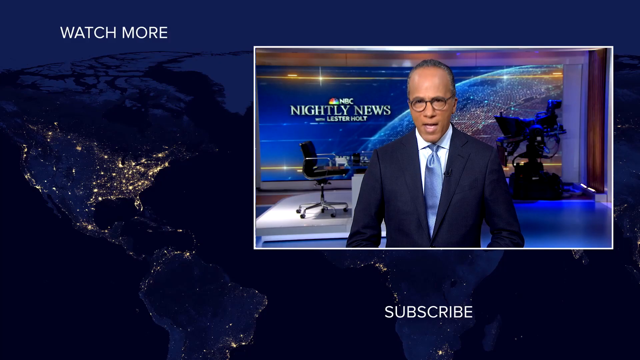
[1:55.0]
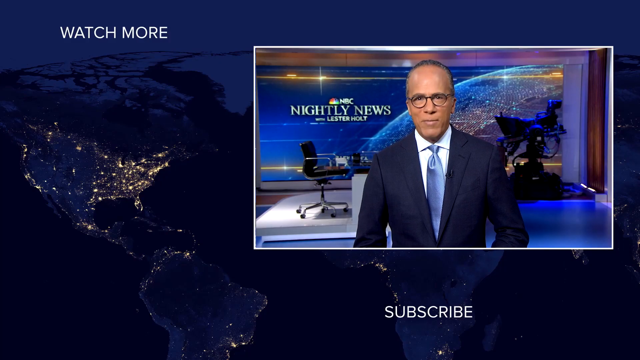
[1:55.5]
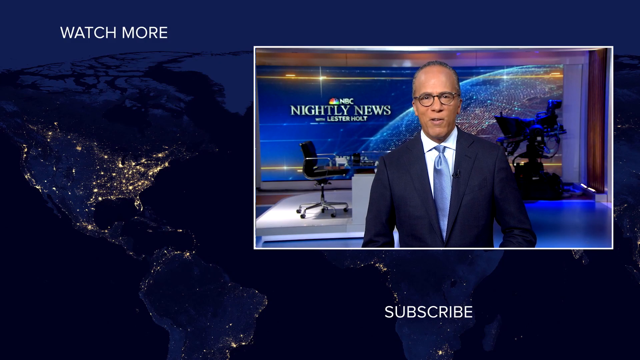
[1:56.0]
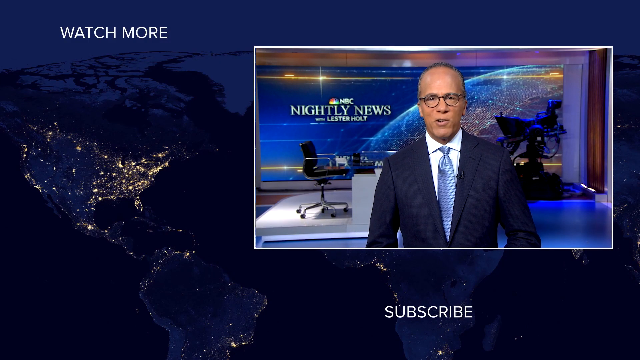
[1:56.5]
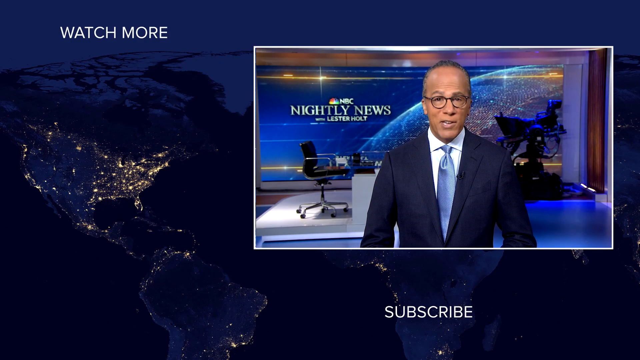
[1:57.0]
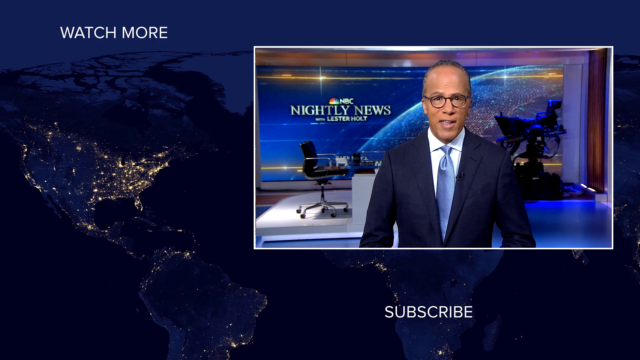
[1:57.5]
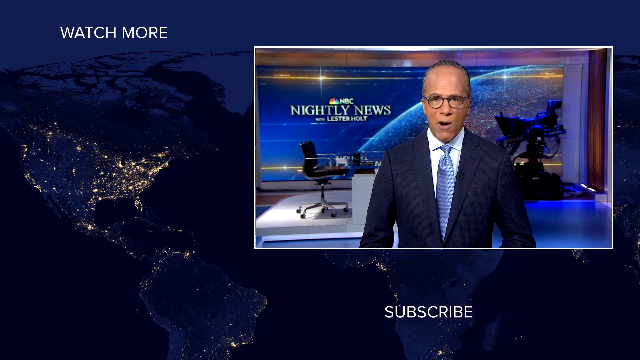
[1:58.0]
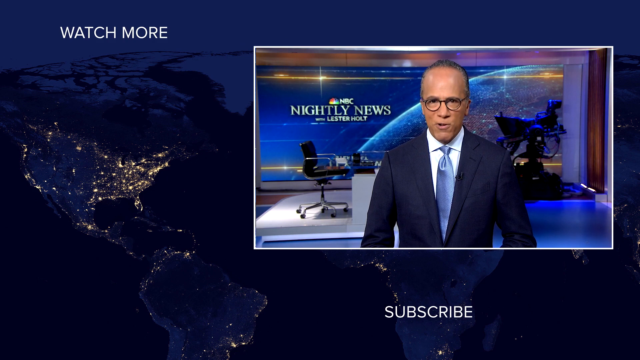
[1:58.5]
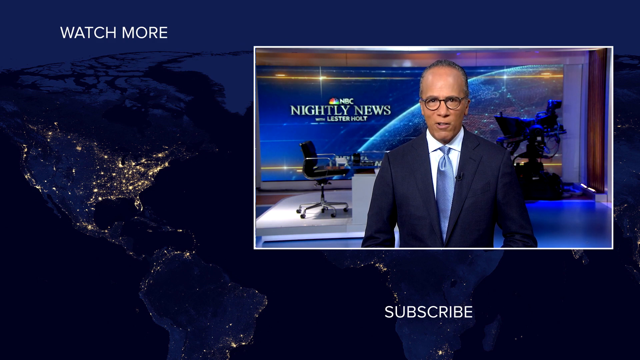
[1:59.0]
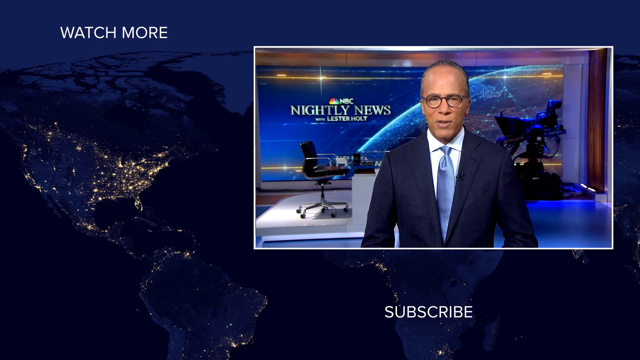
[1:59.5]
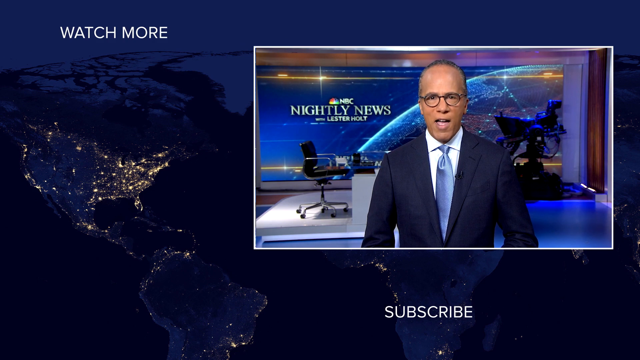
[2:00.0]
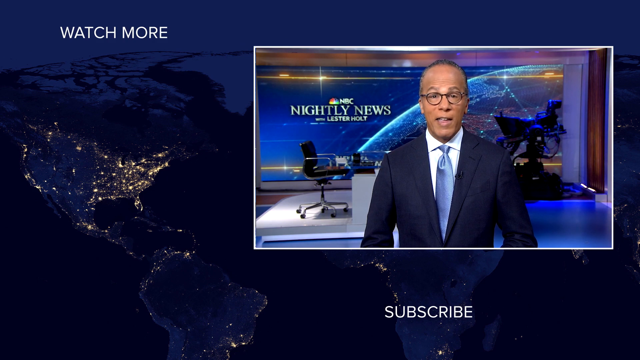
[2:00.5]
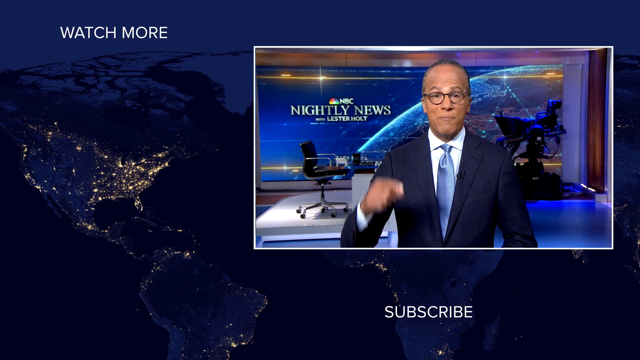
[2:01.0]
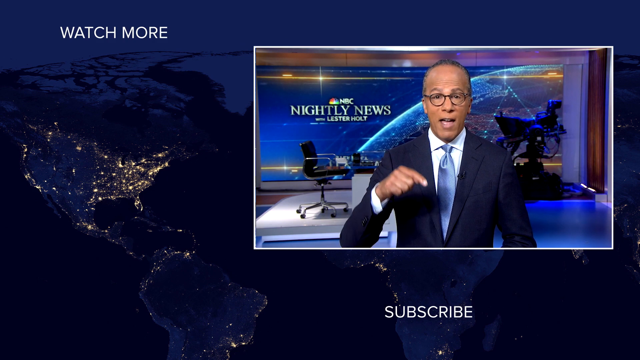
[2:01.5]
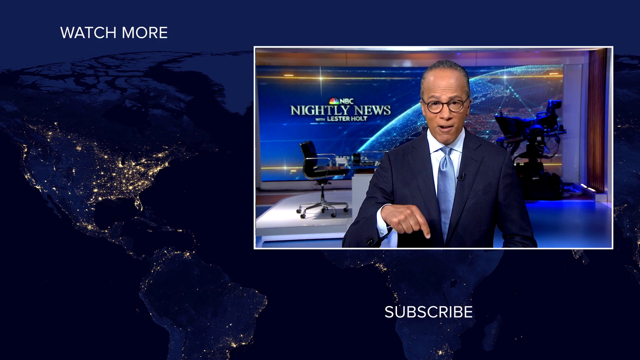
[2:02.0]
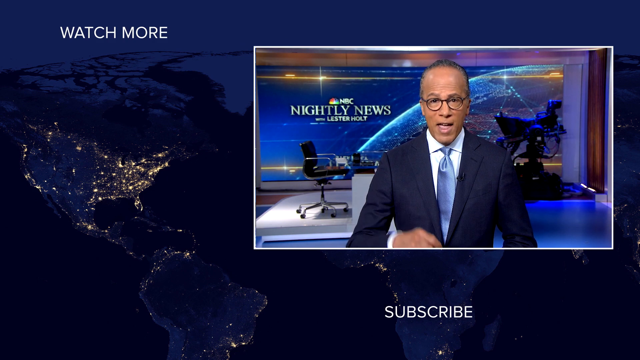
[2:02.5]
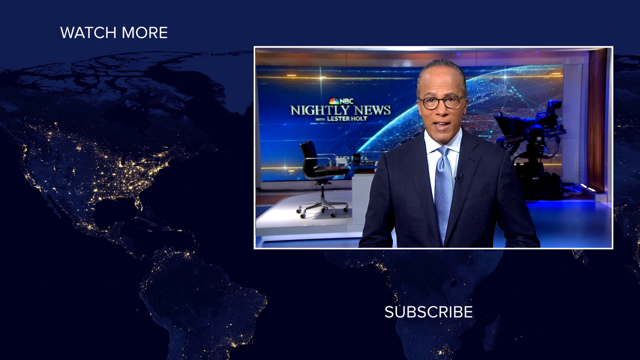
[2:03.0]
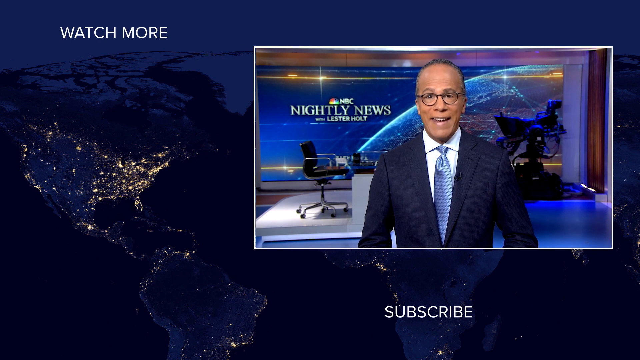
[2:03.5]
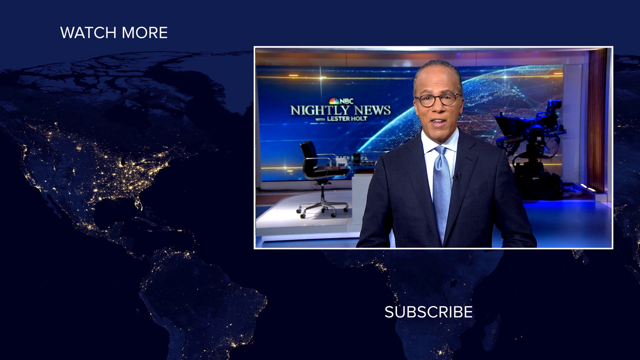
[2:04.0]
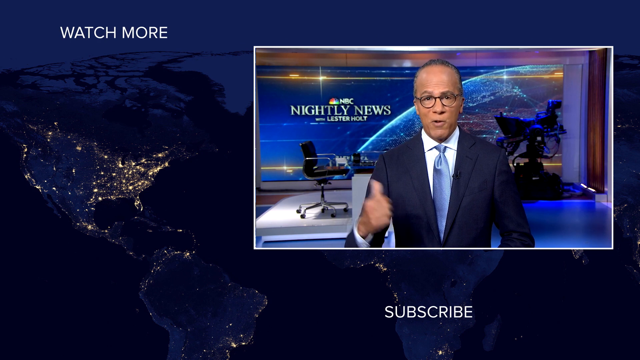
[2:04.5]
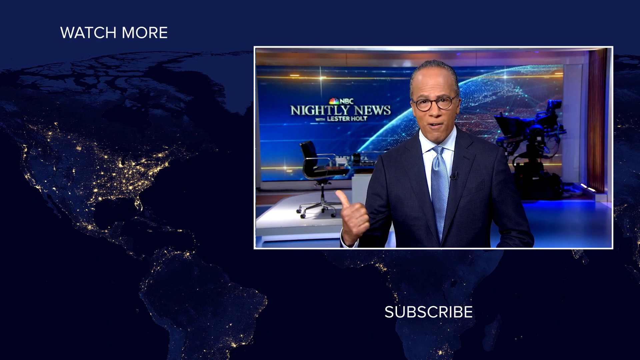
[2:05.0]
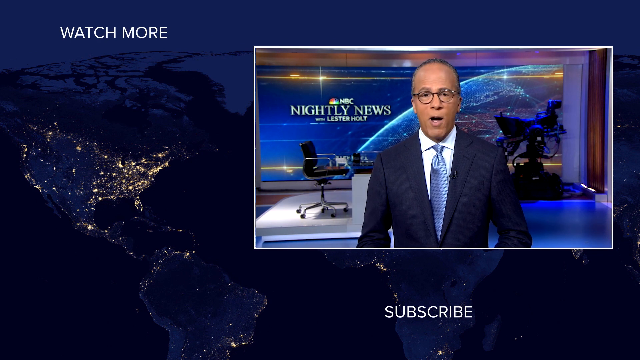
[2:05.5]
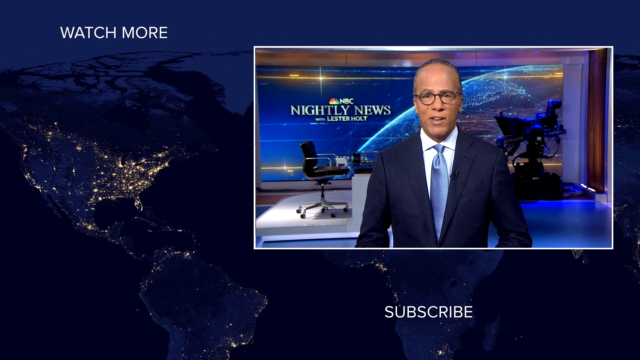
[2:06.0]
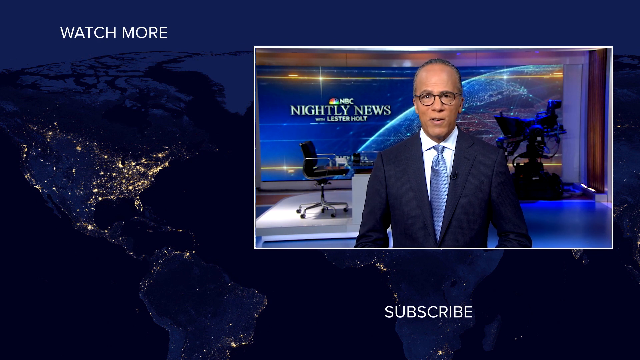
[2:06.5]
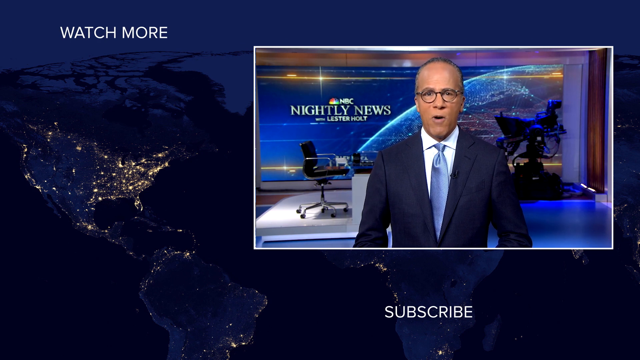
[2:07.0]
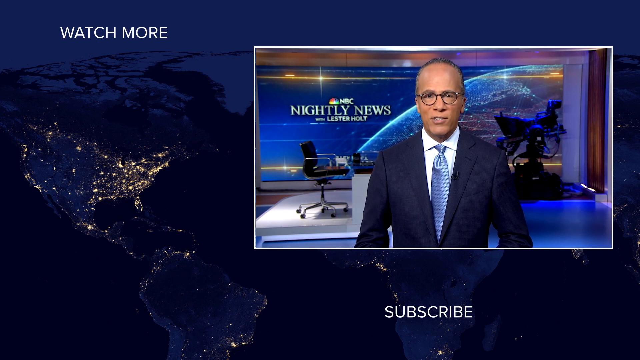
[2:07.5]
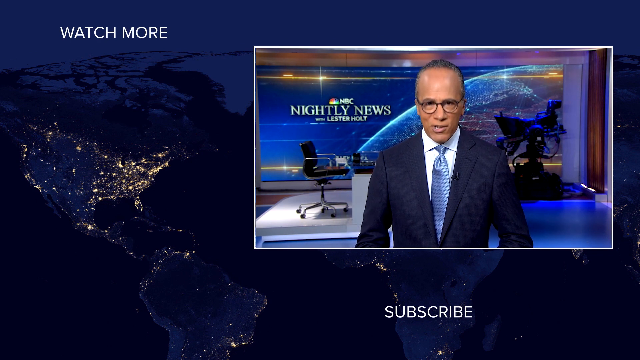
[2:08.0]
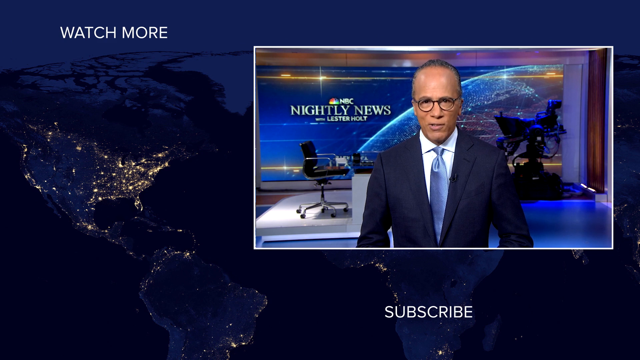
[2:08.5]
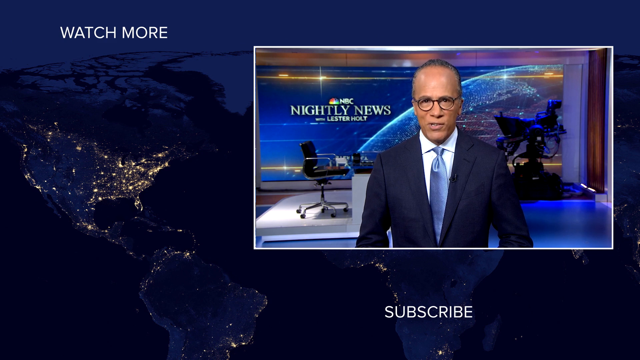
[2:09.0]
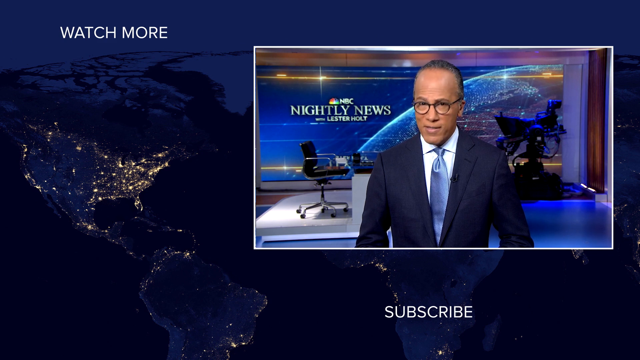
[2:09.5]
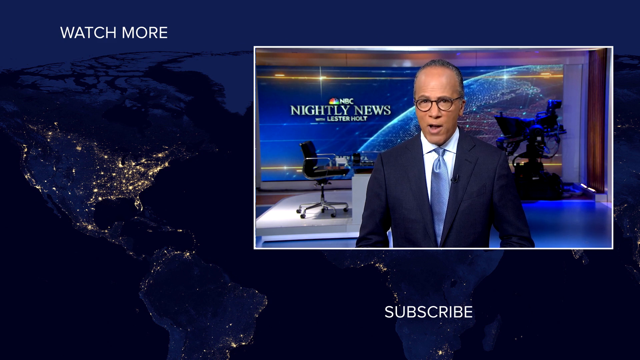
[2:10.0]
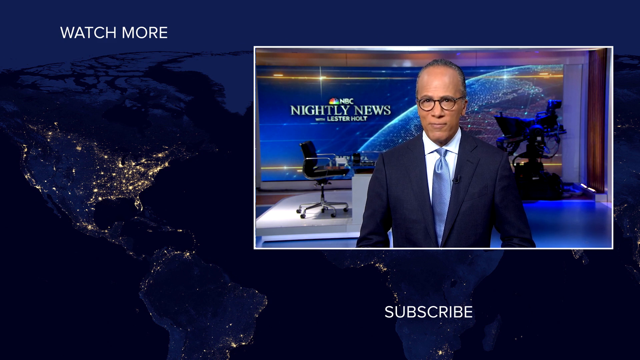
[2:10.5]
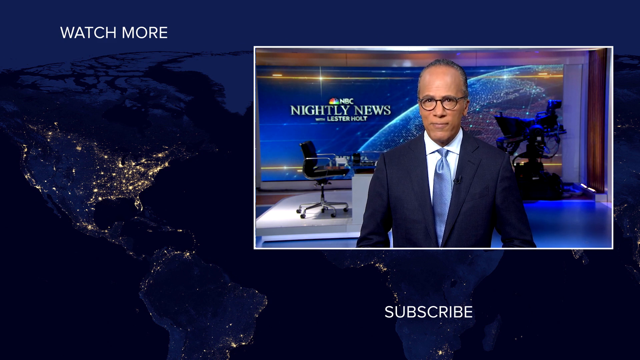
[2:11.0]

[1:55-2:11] A news graphic appears showing a newscaster, Lester Holt, a Black man in a dark blue suit, light blue tie and glasses, talking to the camera. Behind him text reads "Nightly News." He takes up the box on the right, more than half of the space, and in front of him are the circular NBC News logo and a box logo with the peacock that is all white, with "subscribe" written underneath both. There is a graphic reading "News" with a peacock; one logo has a white peacock and the other a colored peacock. On the left are two more news-story boxes, one on top of the other. The top one reads "Breaking, NASA astronauts splashdown after nine" and shows a sky with what may be astronauts coming down on little parachutes. The box beneath it reads "this is Mach, NBC News" and looks like it shows a cityscape. The background is very dark blue, with a few little lights at the bottom that maybe outline continents.